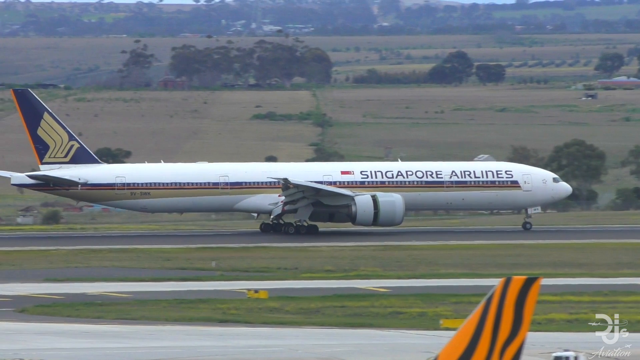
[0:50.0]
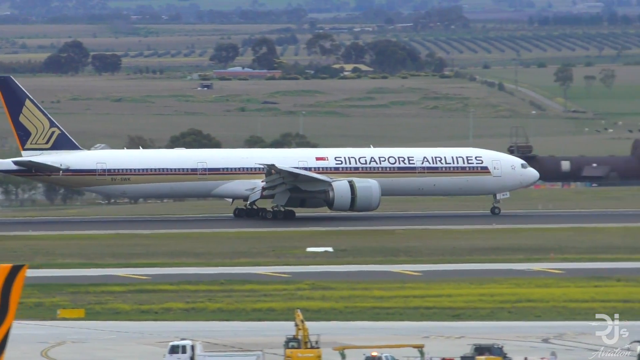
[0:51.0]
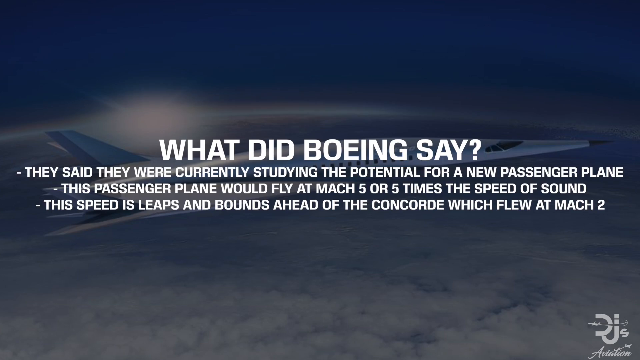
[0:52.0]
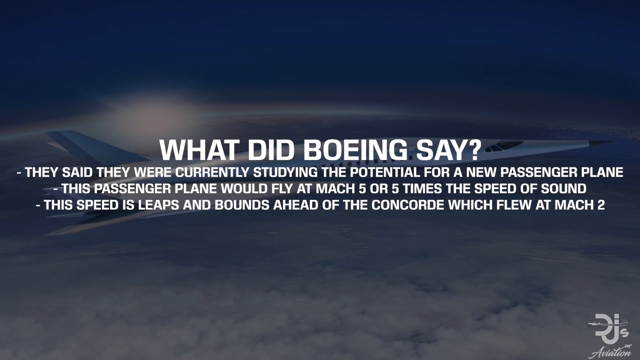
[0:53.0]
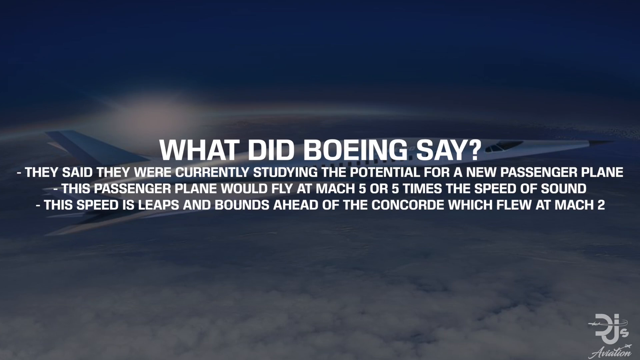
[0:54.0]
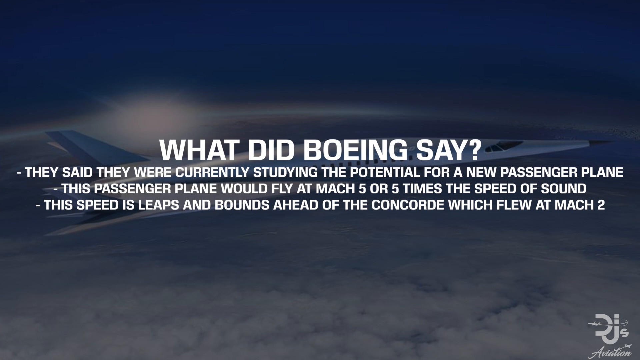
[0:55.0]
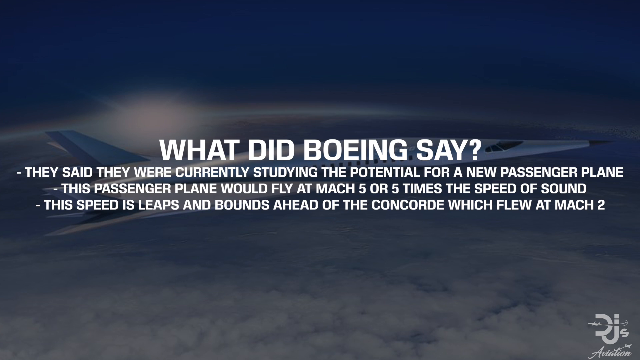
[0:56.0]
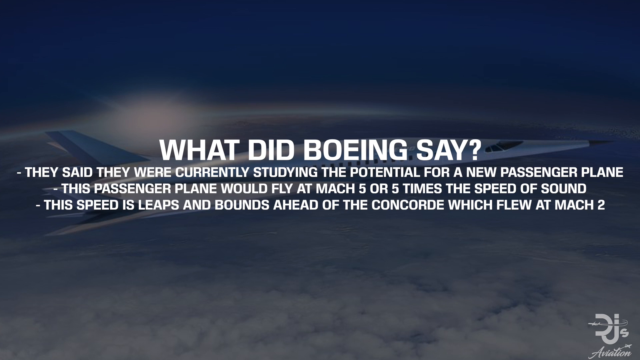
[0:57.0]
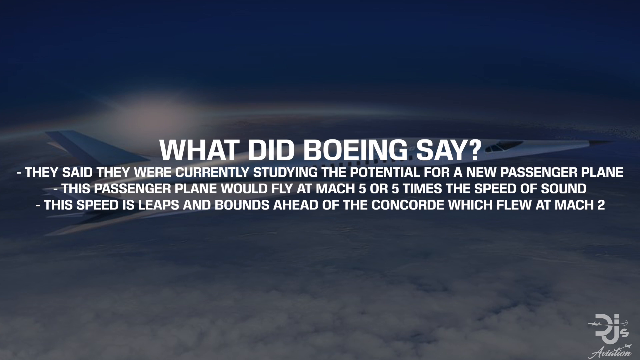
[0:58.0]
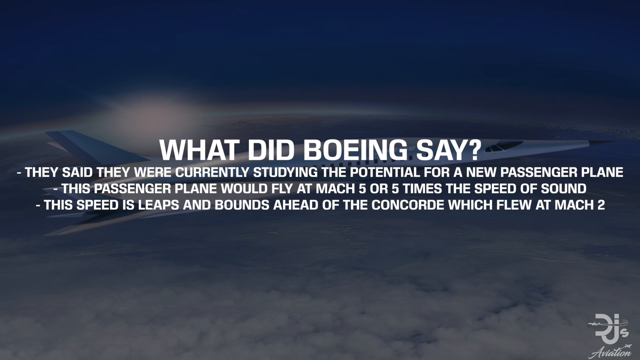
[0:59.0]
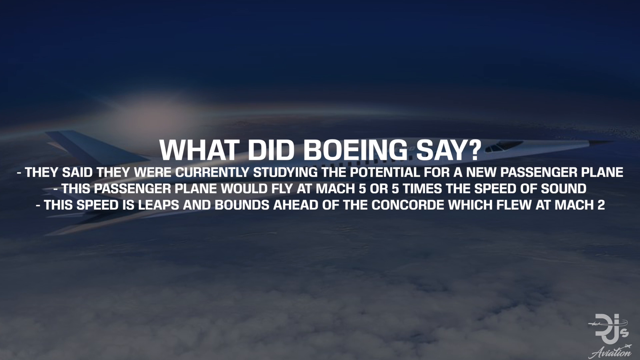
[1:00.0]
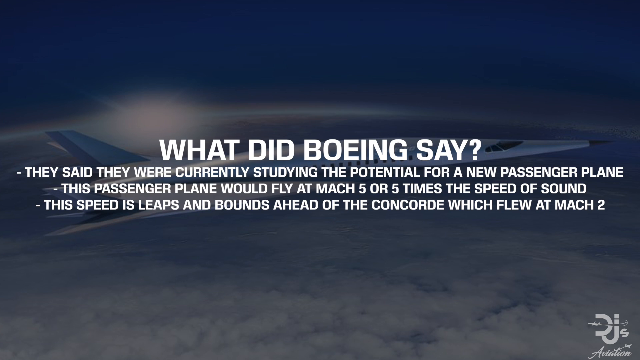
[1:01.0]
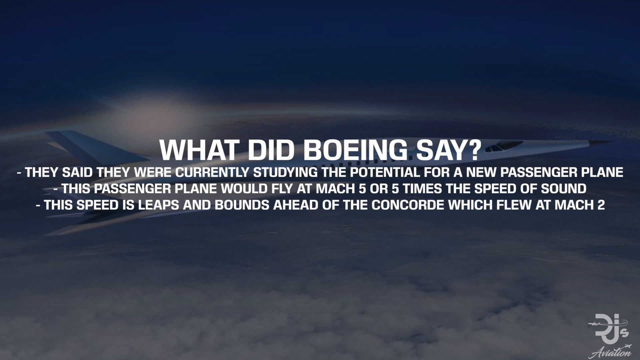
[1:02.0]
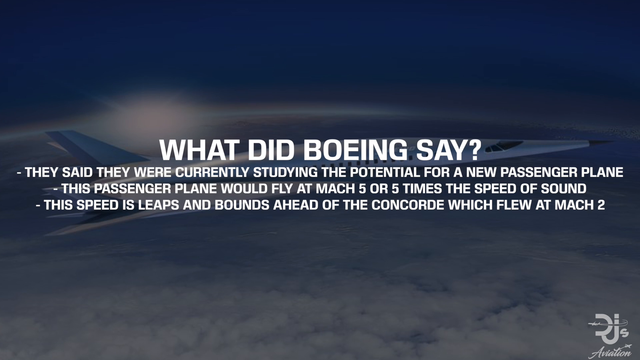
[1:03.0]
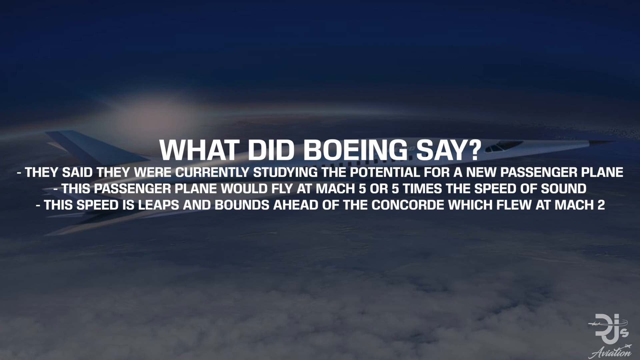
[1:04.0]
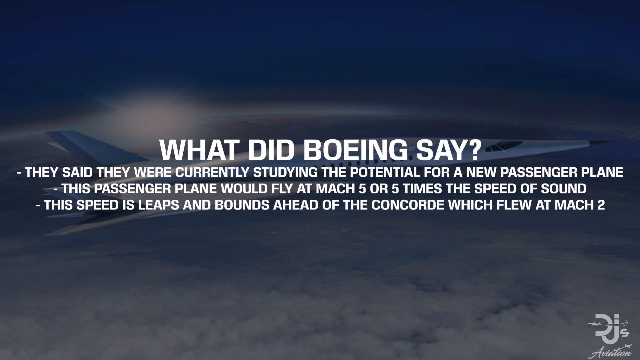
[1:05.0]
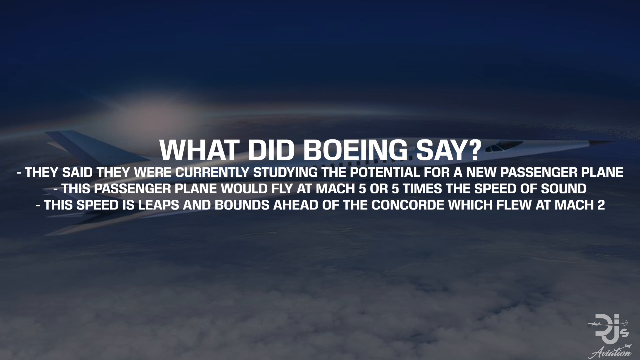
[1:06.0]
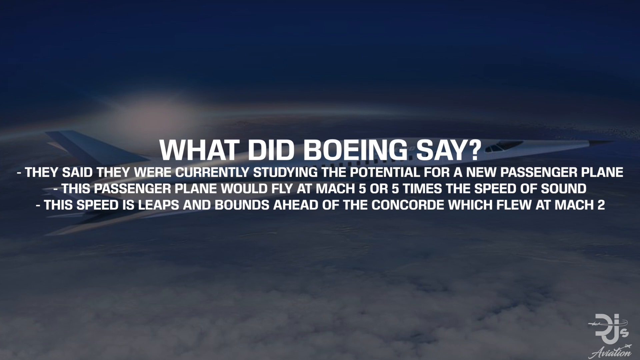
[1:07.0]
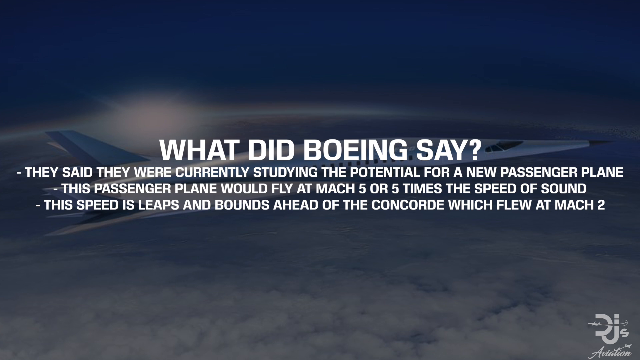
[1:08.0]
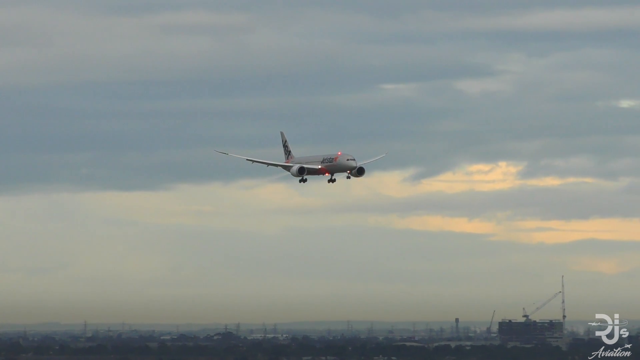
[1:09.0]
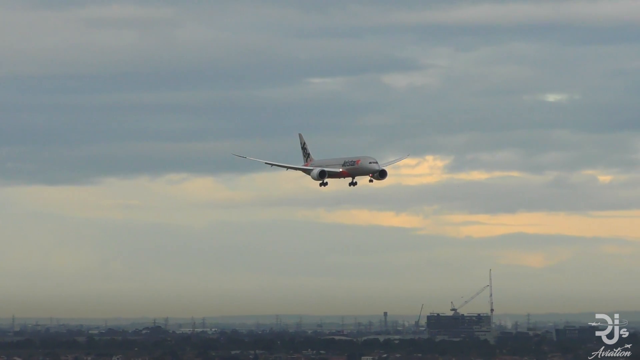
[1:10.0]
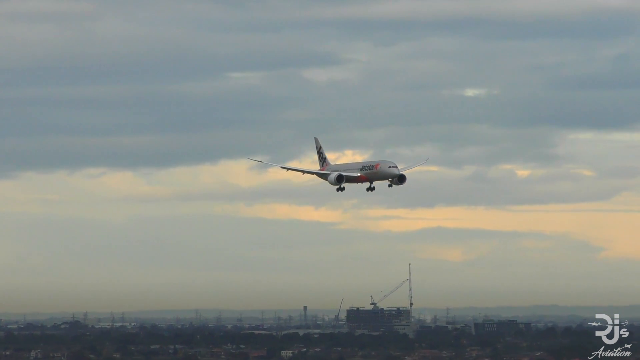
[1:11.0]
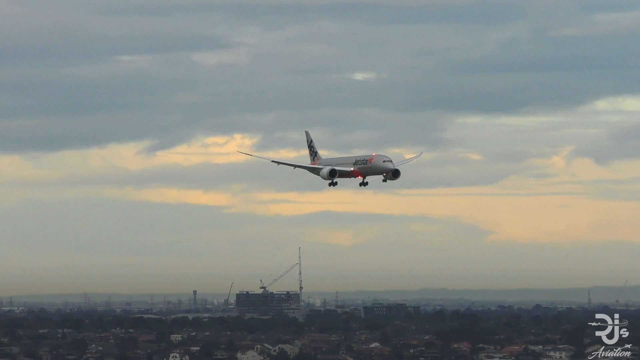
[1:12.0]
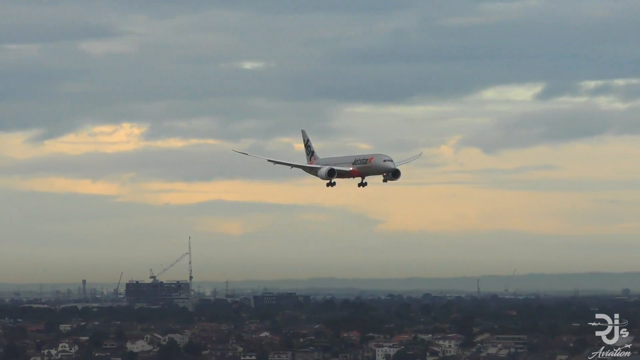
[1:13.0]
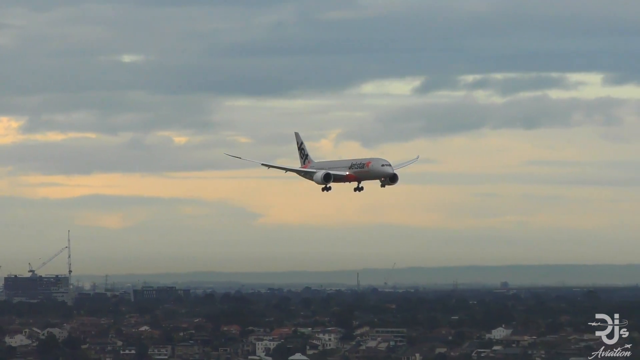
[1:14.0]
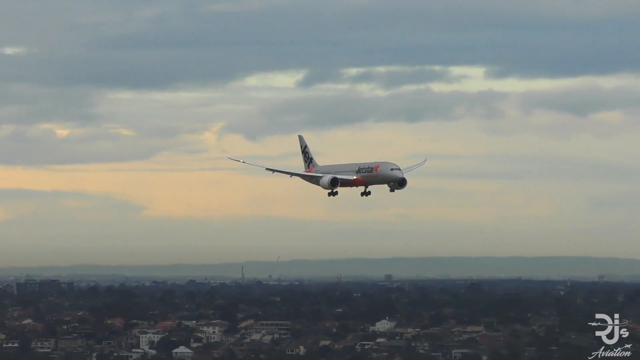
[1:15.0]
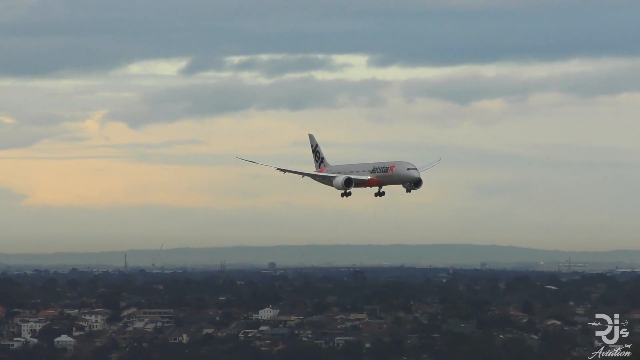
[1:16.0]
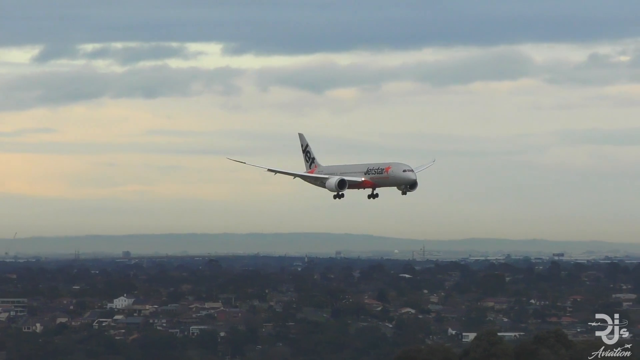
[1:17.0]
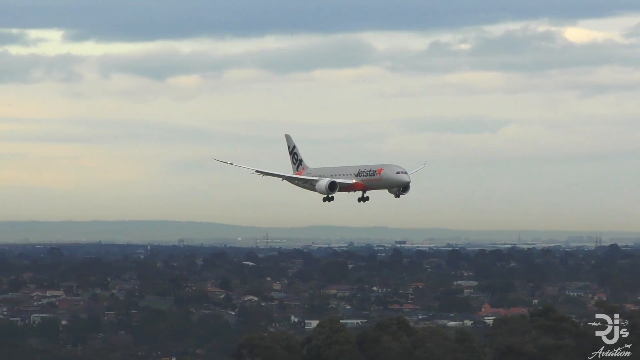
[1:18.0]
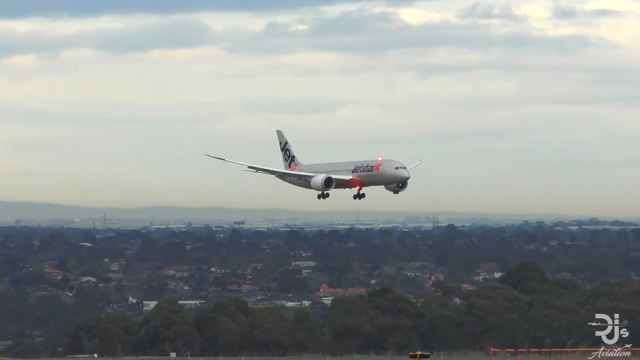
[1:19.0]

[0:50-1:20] The Singapore Airlines jet is still landing. A pop-up of white text then appears, overlaid on the image of the Boeing supersonic jet. In large font it reads "what did Boeing say?" and below that: "they said they were currently studying the potential for a new passenger plane. This passenger plane would fly at Mach 5, or five times the speed of sound. This speed is leaps and bounds ahead of the Concorde, which flew at Mach 2." Next, another image of an airplane landing at an airport appears.